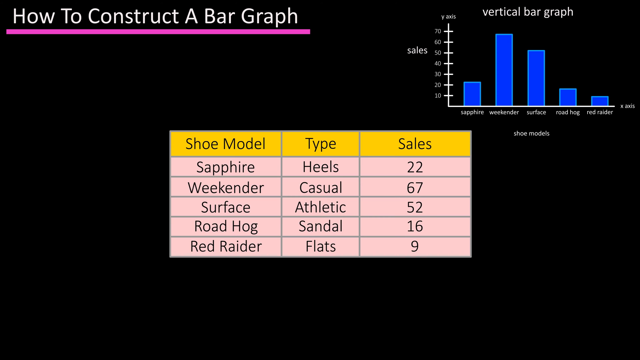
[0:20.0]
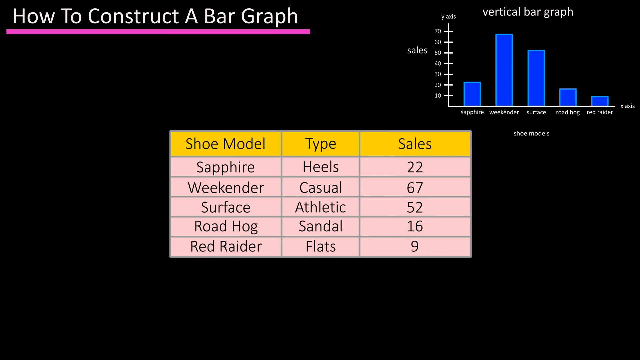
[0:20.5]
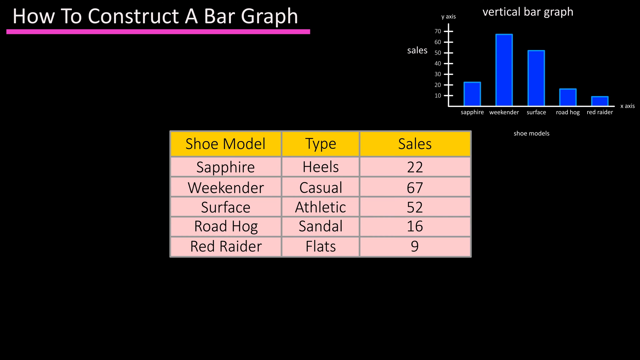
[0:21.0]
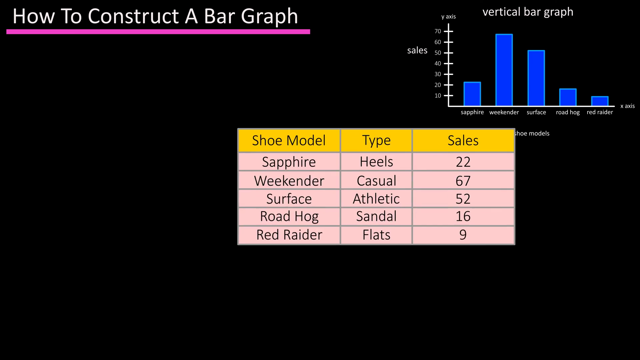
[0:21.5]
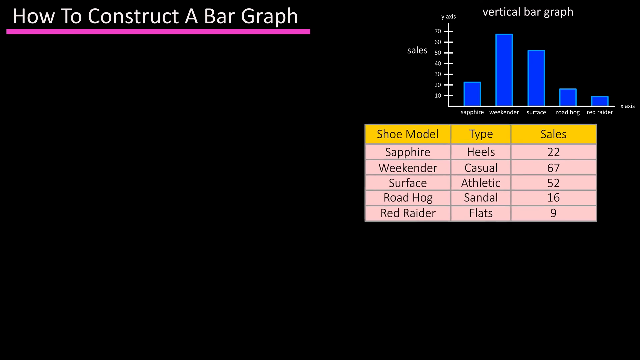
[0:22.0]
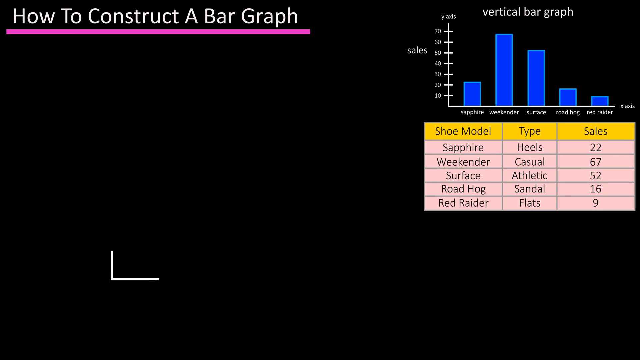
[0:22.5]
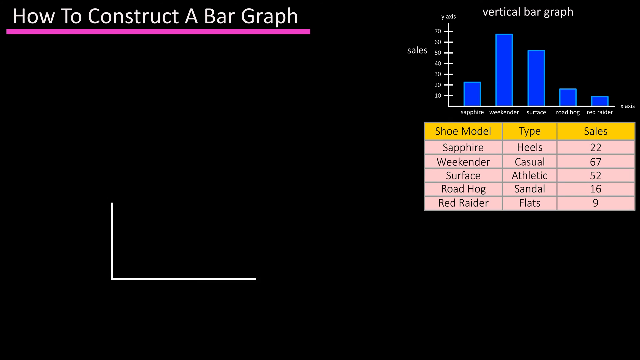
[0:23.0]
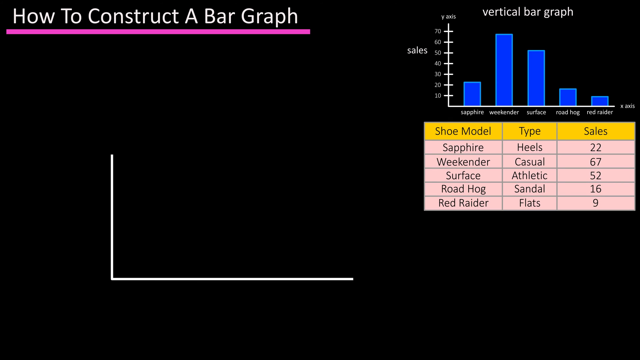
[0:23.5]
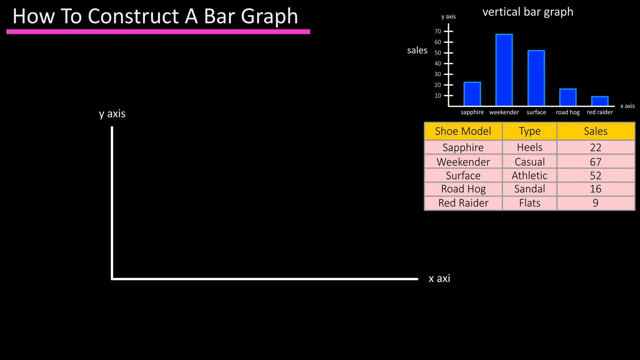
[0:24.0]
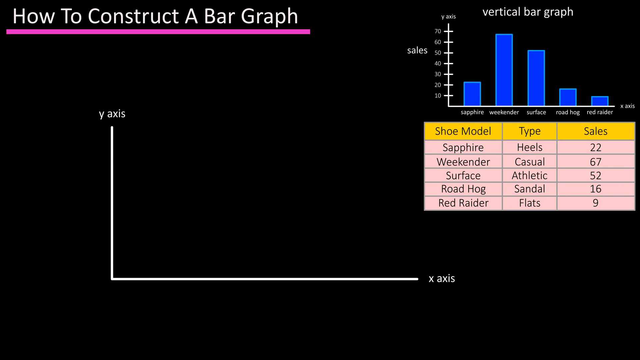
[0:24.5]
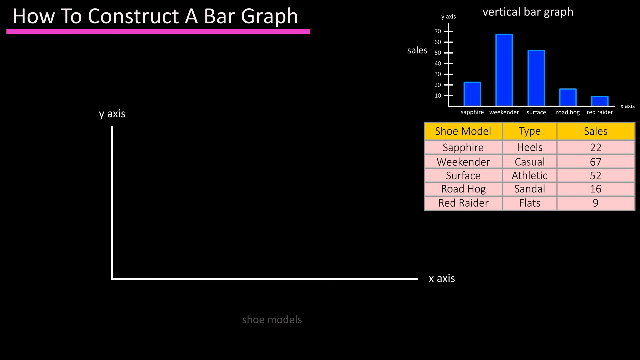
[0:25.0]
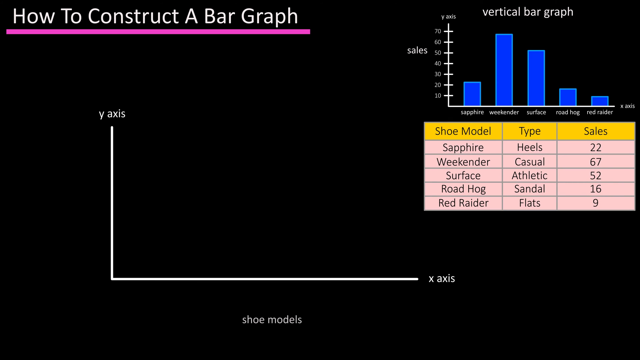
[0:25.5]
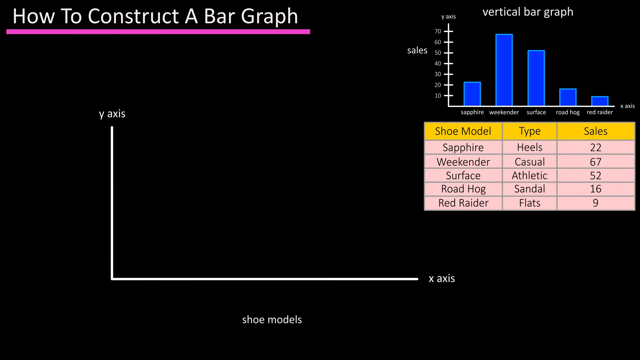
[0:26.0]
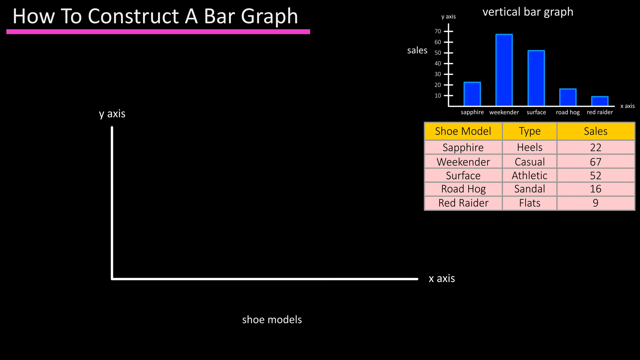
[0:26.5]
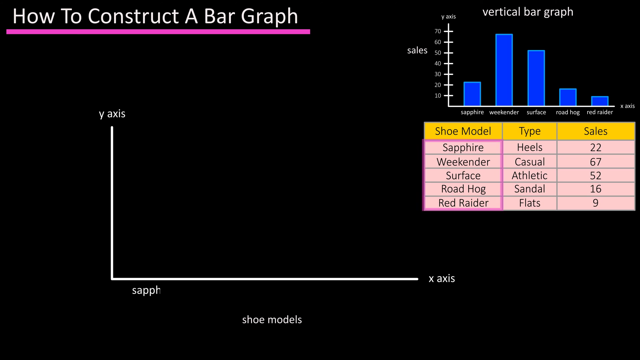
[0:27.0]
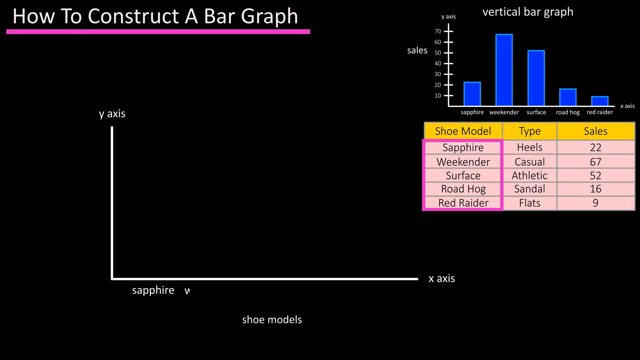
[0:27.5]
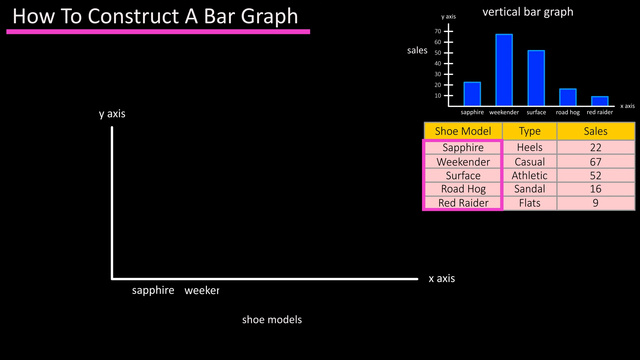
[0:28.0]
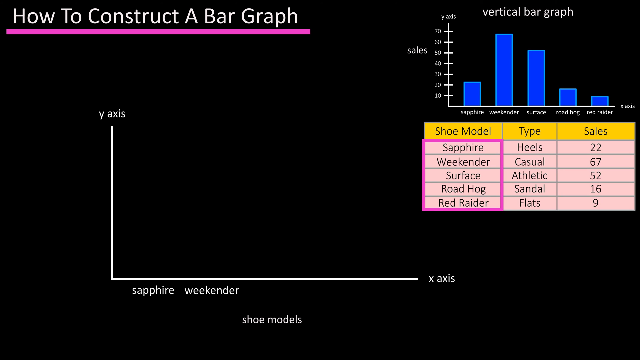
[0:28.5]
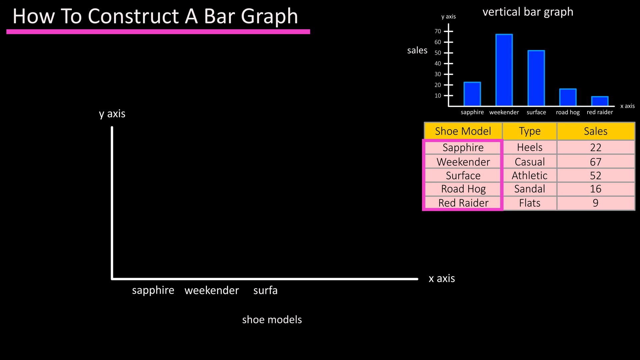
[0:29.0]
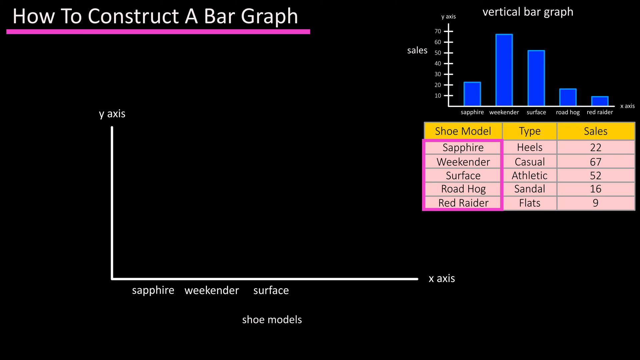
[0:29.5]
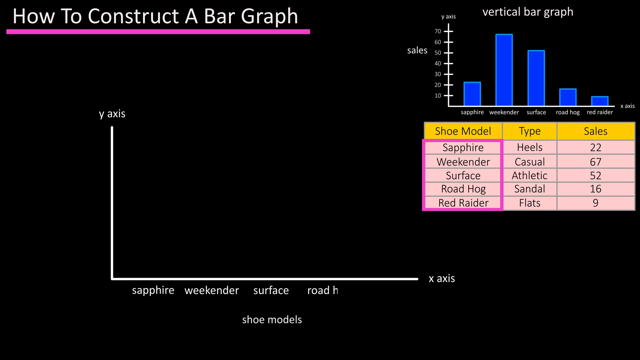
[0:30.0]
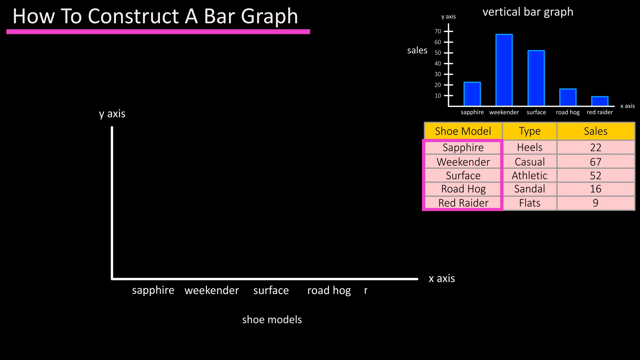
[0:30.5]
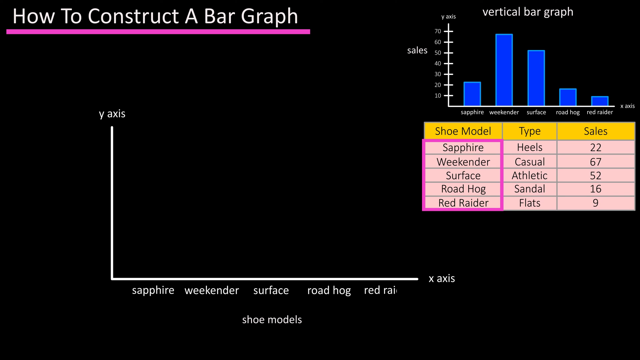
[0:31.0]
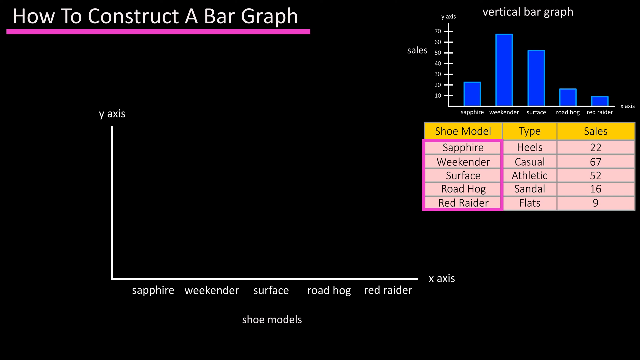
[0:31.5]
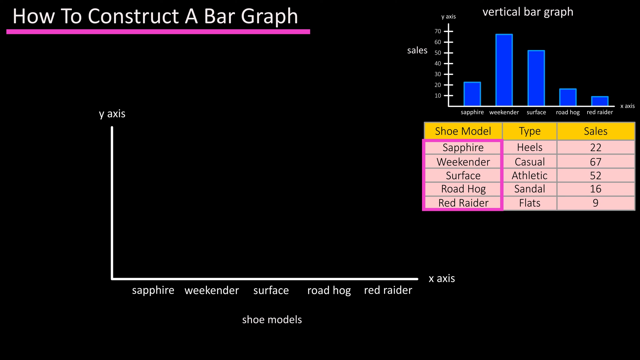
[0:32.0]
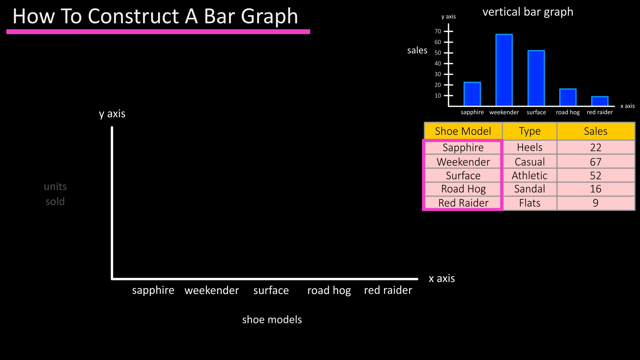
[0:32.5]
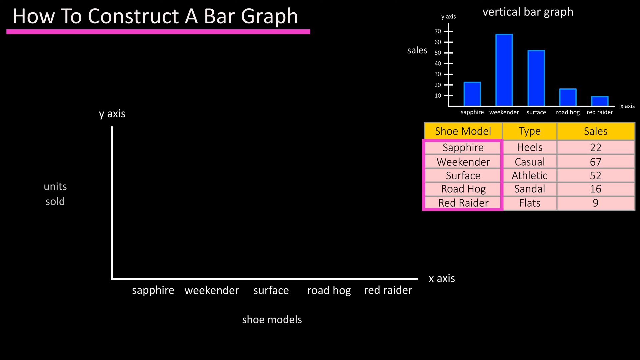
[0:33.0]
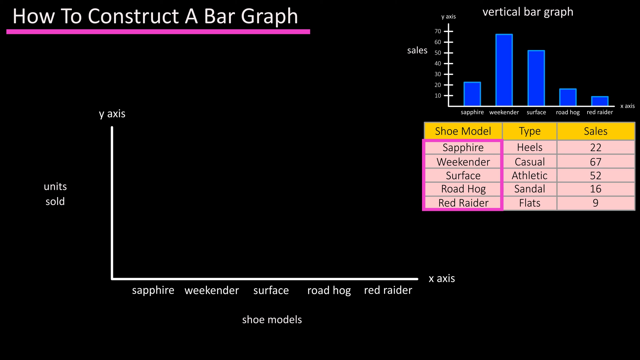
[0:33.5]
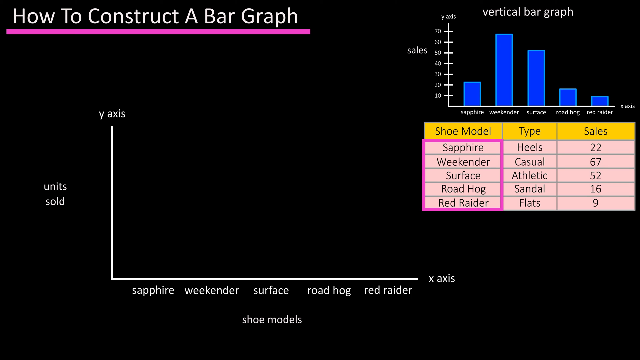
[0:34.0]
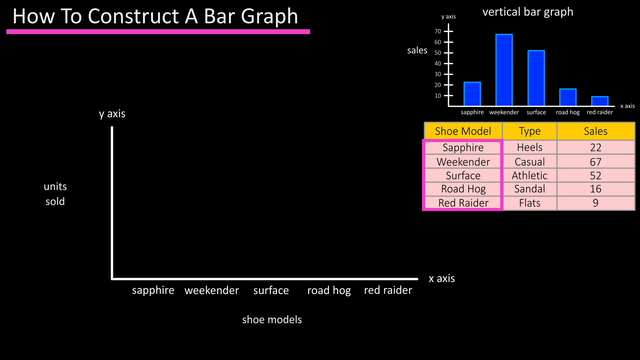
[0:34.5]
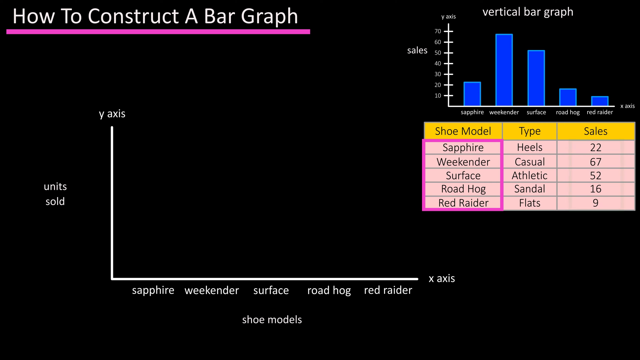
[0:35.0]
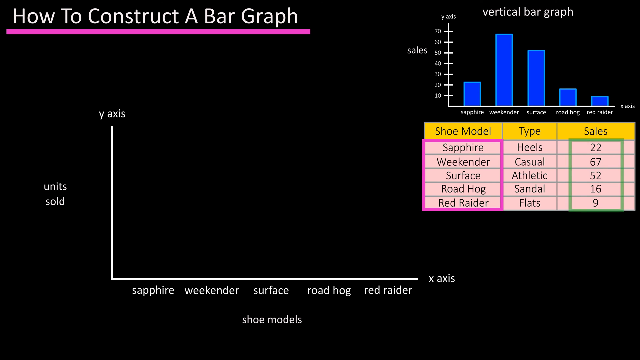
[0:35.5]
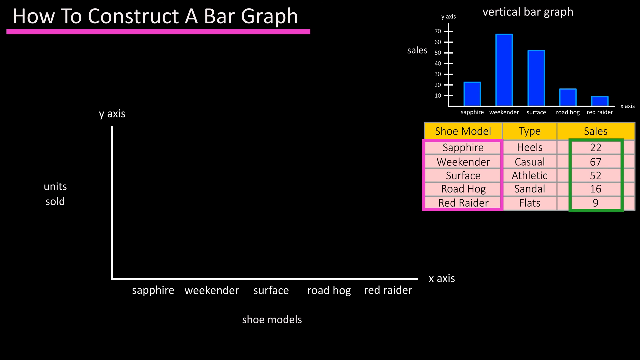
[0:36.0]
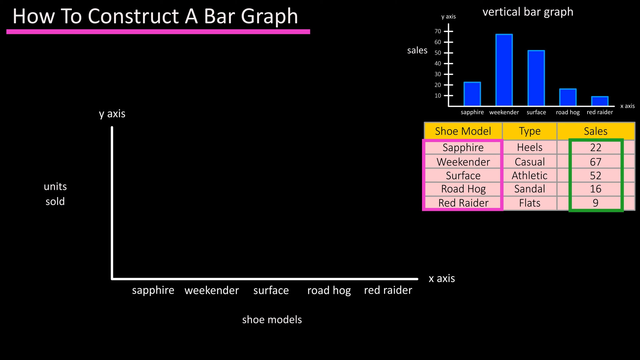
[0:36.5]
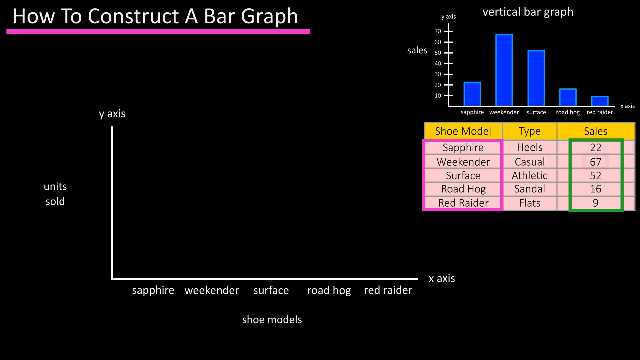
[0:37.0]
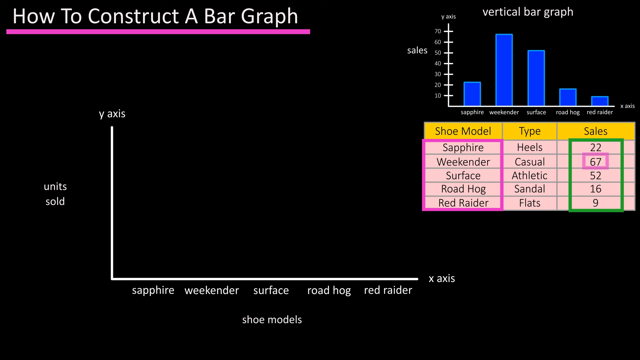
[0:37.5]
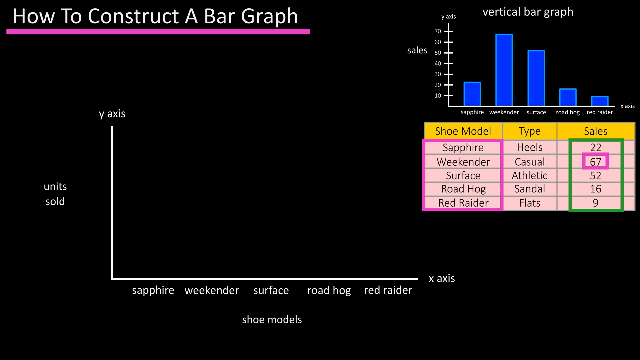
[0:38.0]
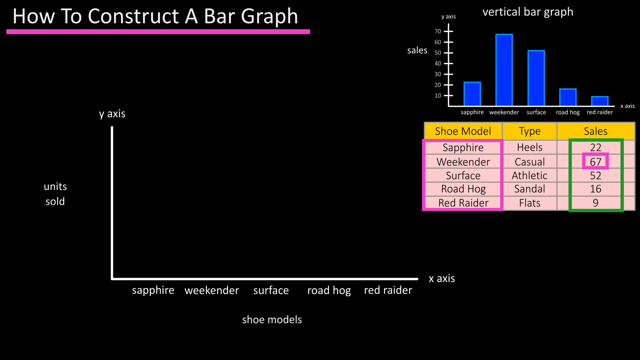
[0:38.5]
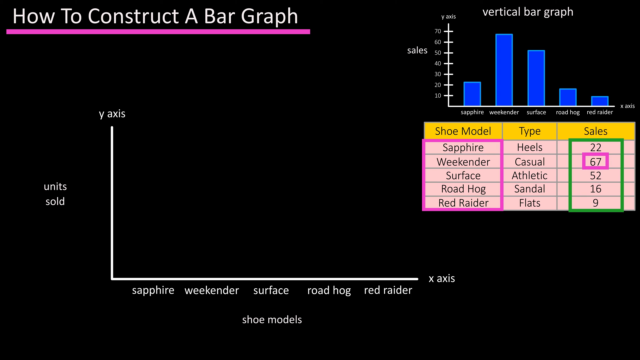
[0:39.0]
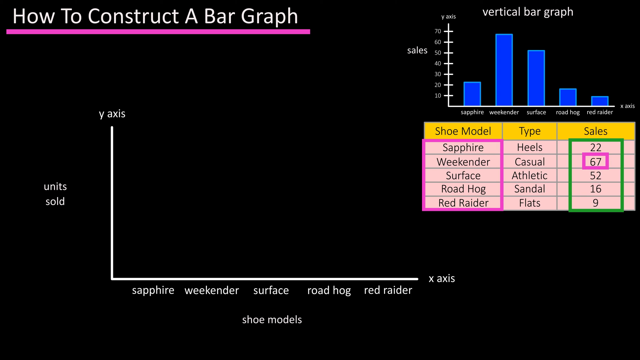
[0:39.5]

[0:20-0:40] Focusing on how to construct a bar graph, the video breaks the graph up into two different graphs, showing the x-axis and the y-axis. It then focuses on the shoe model, type and sales, the information that will populate the graph, which is displayed in the center for some time. In the far right-hand corner a vertical bar graph stays on screen, with bars for heels, casual, athletic, sandal and flats and the corresponding number for each type of shoe. This corner graph has the x-axis showing sales and the y-axis showing shoe models, with five big blue bars representing the information.